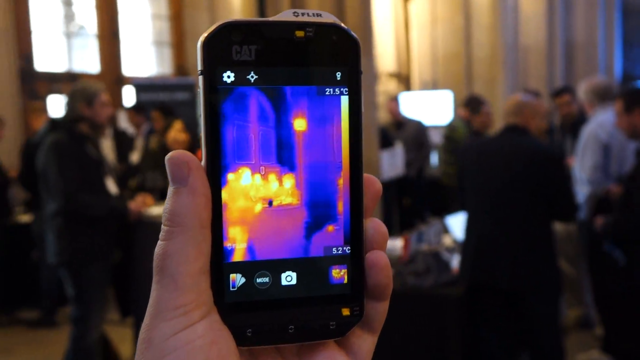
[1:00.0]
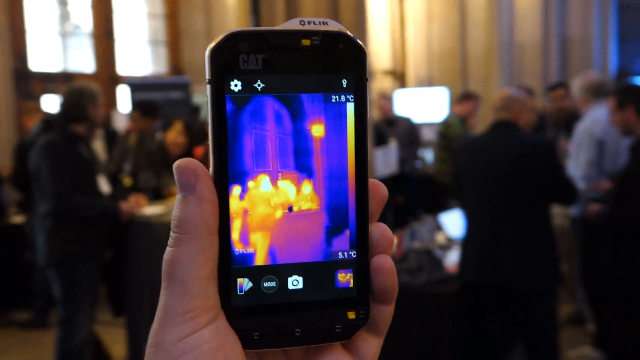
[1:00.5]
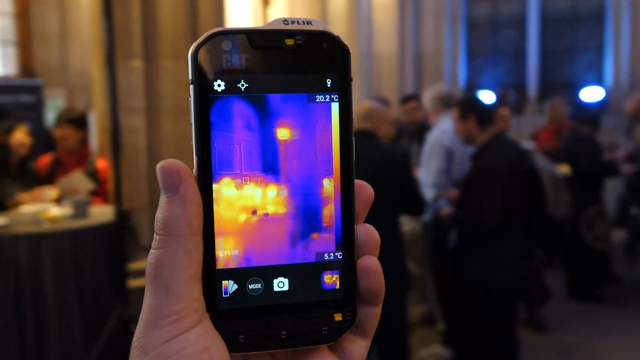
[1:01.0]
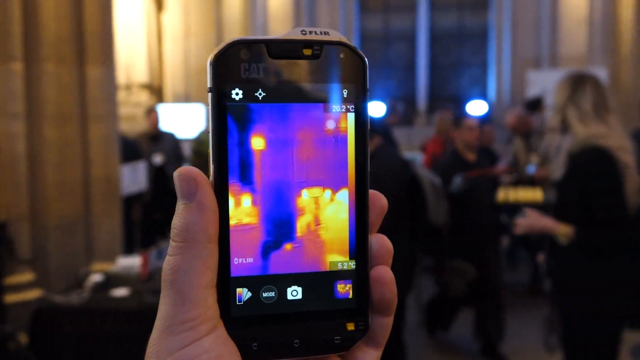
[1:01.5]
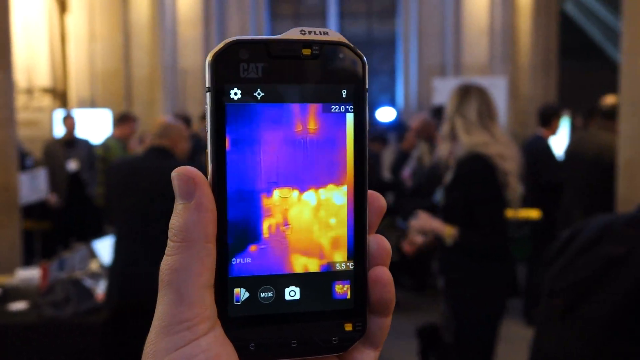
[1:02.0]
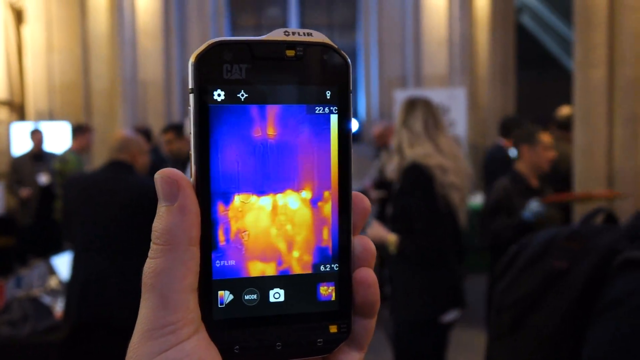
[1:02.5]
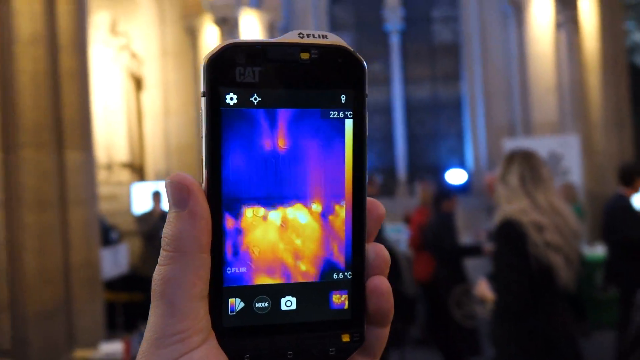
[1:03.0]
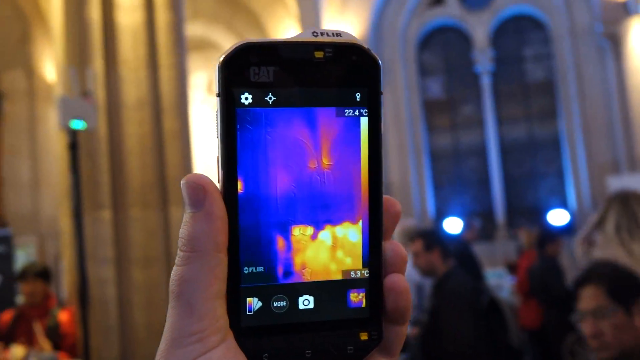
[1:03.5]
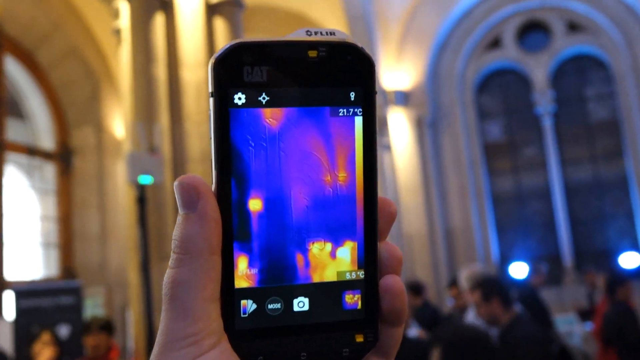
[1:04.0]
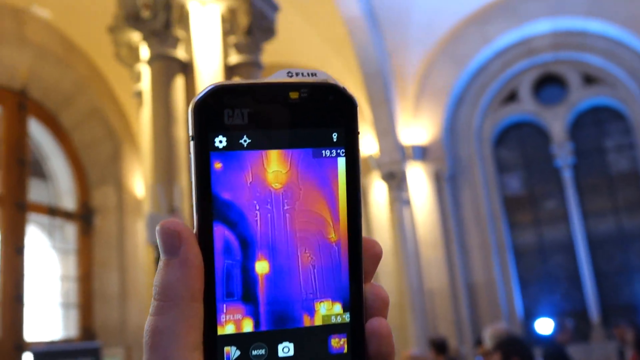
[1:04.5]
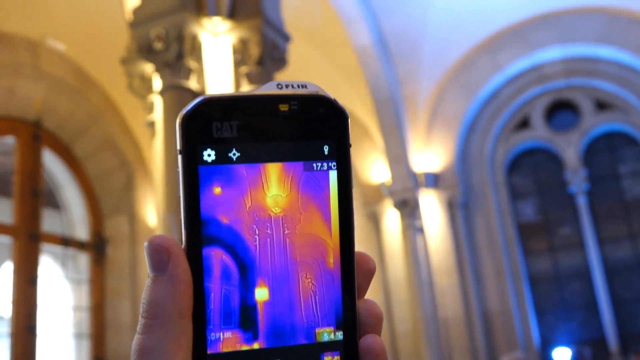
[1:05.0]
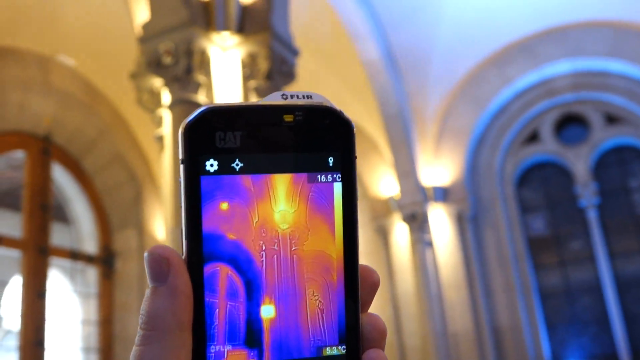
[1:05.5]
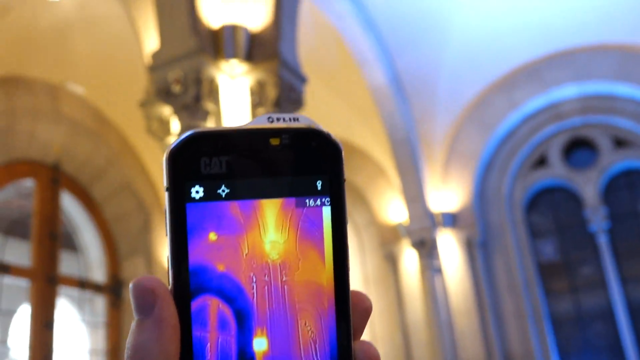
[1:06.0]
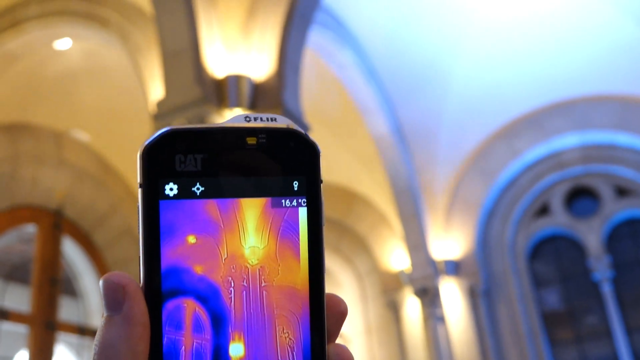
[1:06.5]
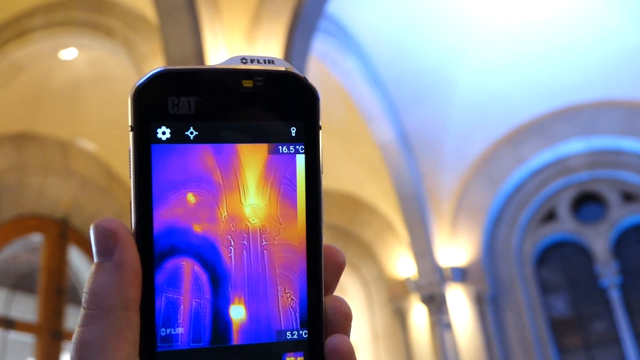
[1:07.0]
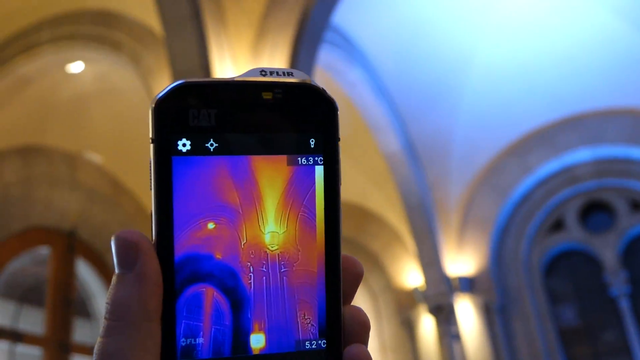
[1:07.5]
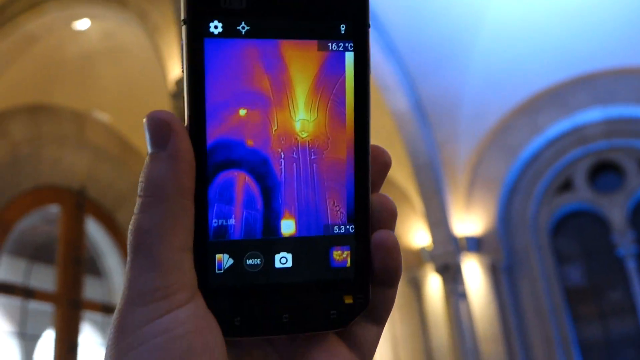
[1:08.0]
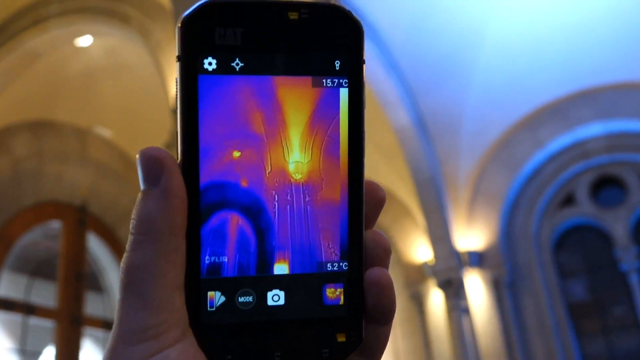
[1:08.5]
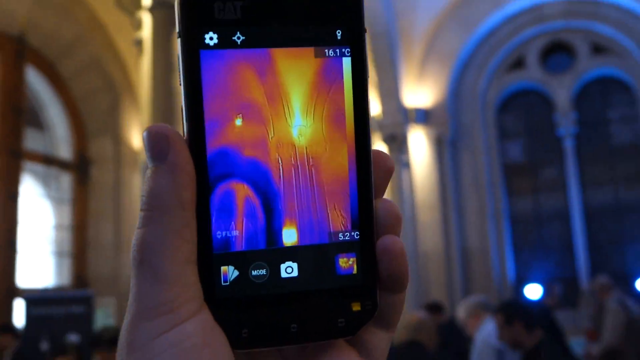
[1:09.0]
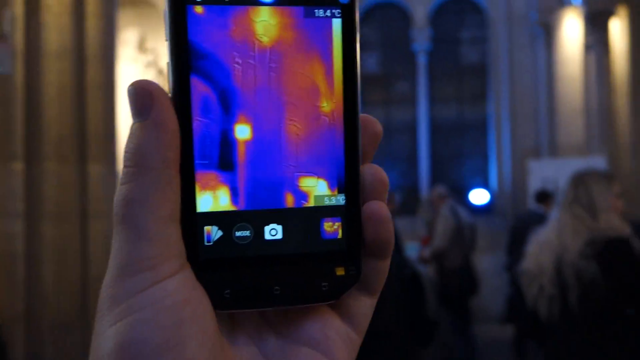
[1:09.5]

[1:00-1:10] The man holds the thermal imaging device in his left hand and slowly moves it from left to right across the room, showing thermal images of different people. He then points it toward the ceiling, making the architecture of the room visible in thermal imagery. The thermal image is full of purplish and blue tones, while the lights appear yellowish red. The architecture looks very old, with very large arched door openings and very large arched windows and pieces of glass, looking very Roman. He points the device at the big lighting near the top of the architecture, showing reddish and yellow hues. The people and the lights seem to appear yellowish red, as does anything emitting heat, while non-heated items appear blue and purple.